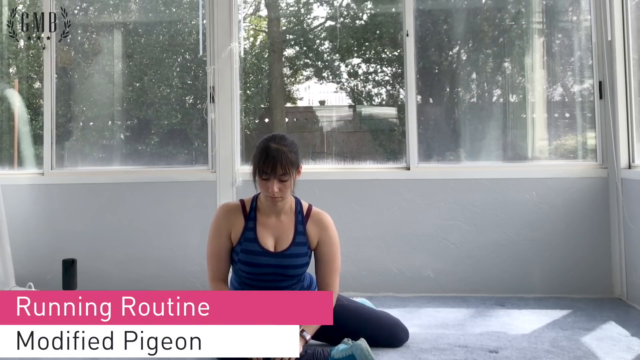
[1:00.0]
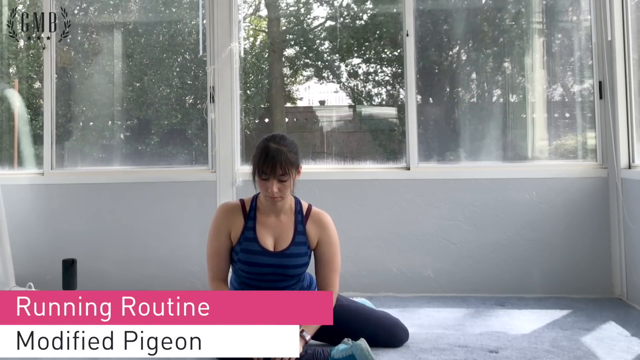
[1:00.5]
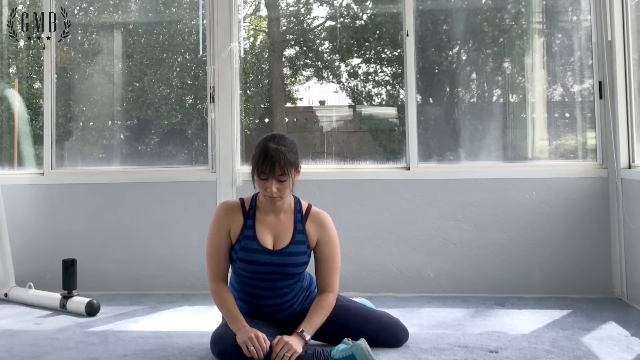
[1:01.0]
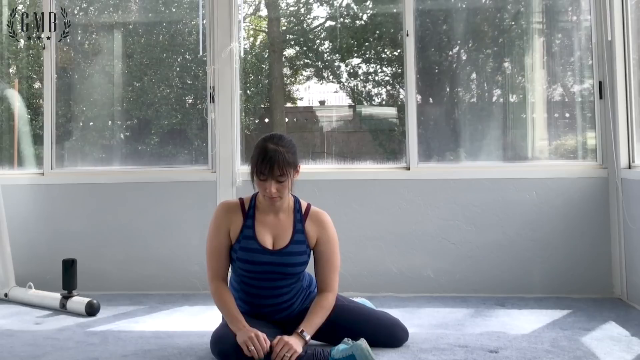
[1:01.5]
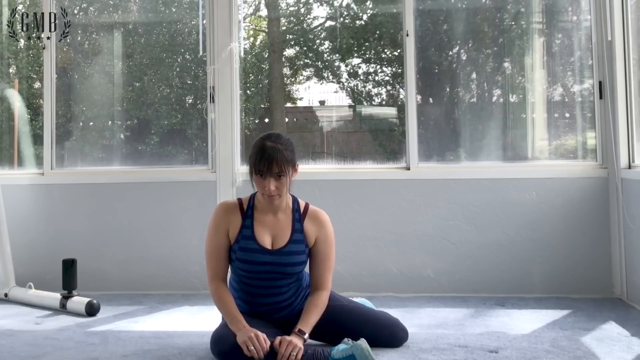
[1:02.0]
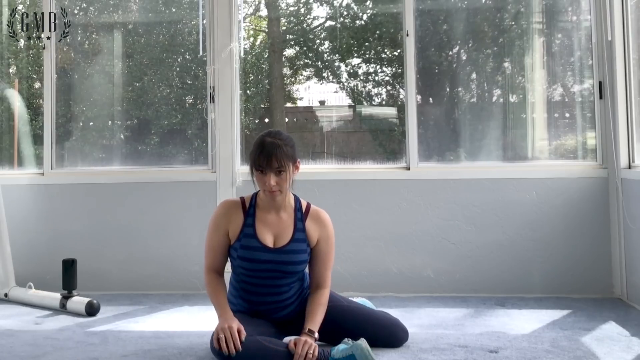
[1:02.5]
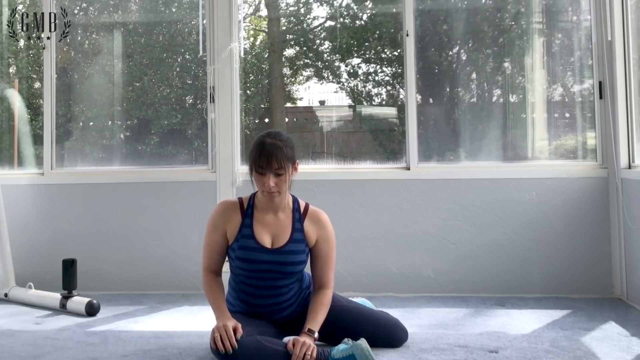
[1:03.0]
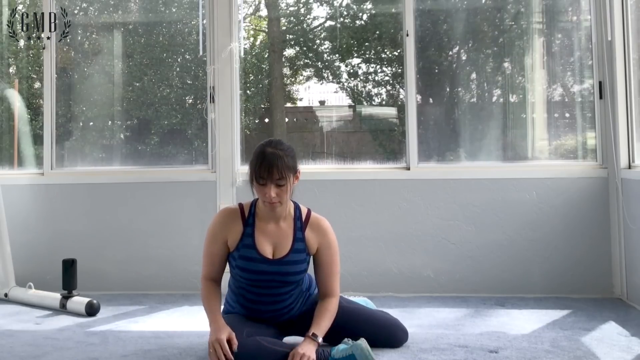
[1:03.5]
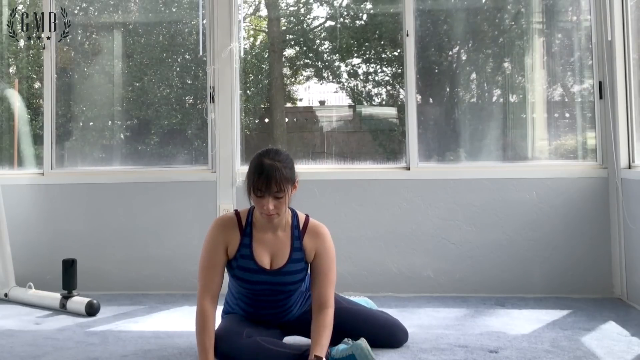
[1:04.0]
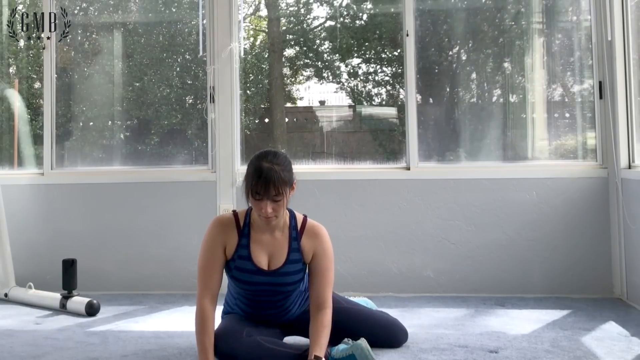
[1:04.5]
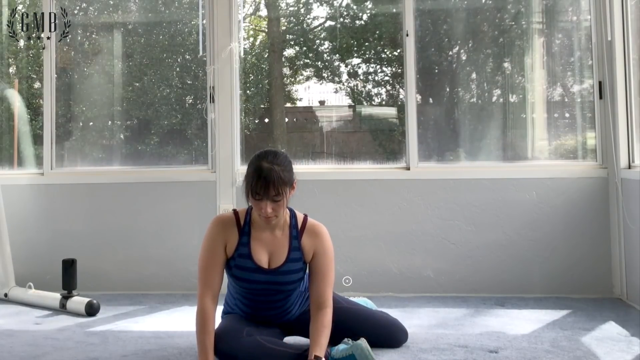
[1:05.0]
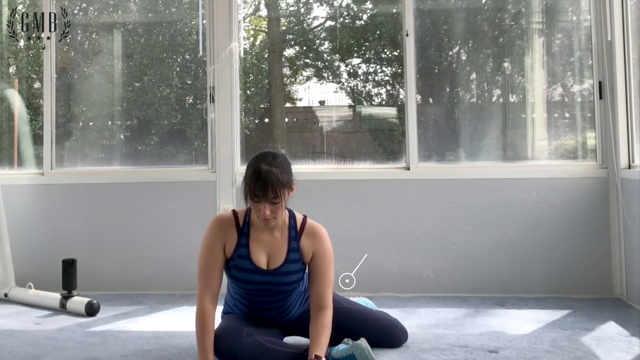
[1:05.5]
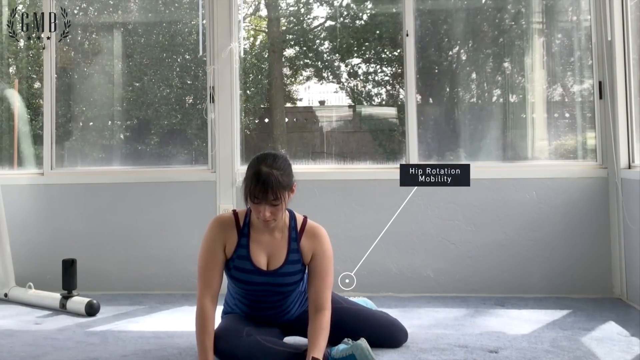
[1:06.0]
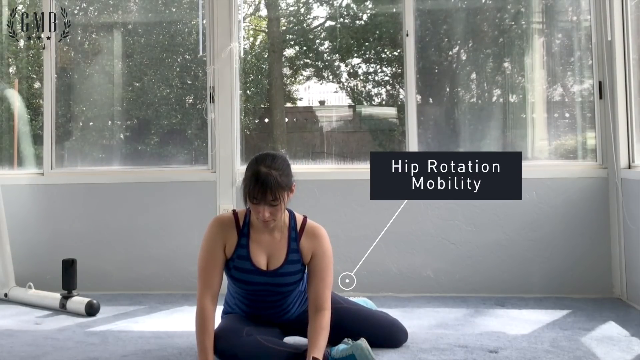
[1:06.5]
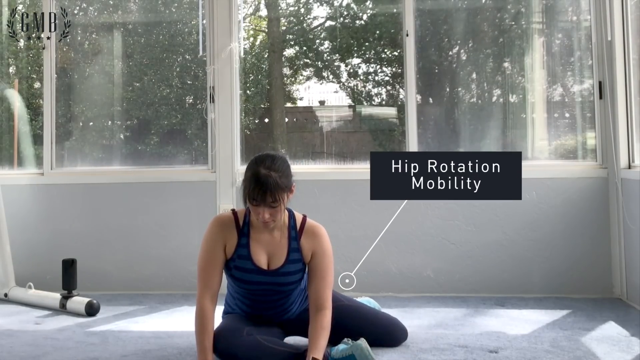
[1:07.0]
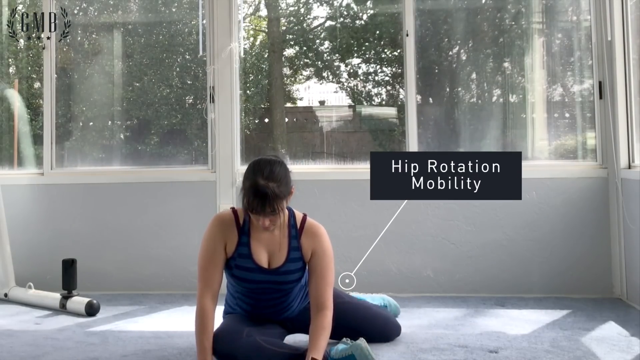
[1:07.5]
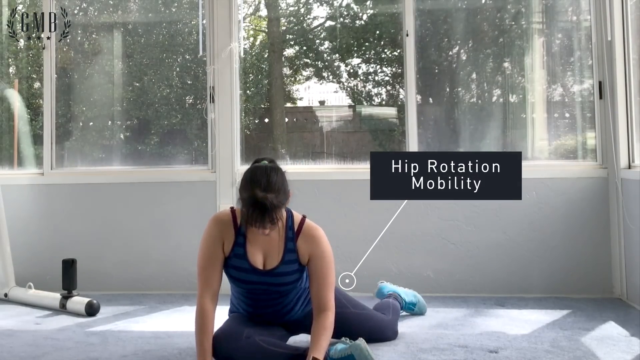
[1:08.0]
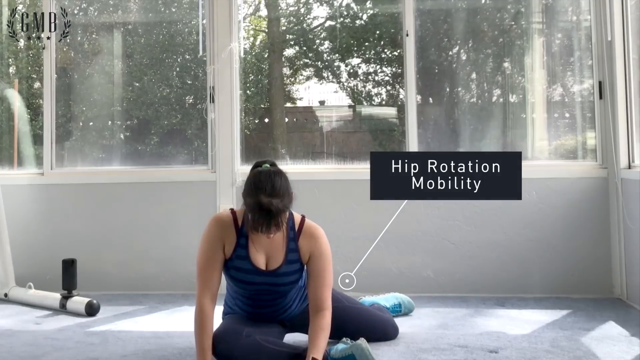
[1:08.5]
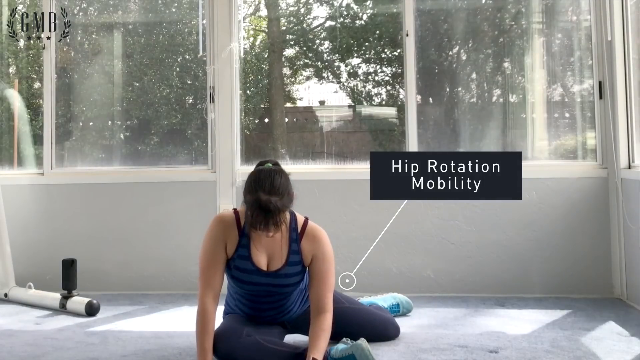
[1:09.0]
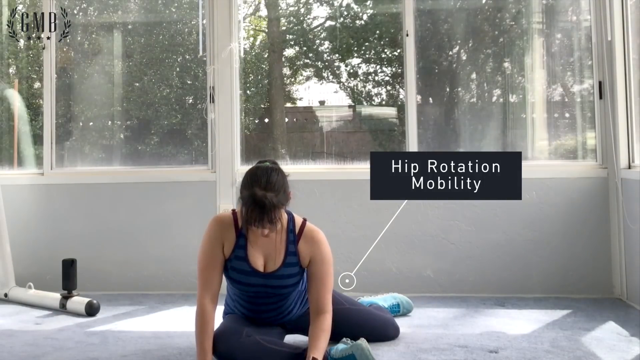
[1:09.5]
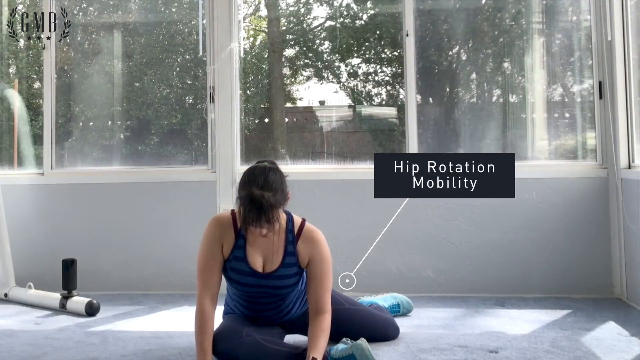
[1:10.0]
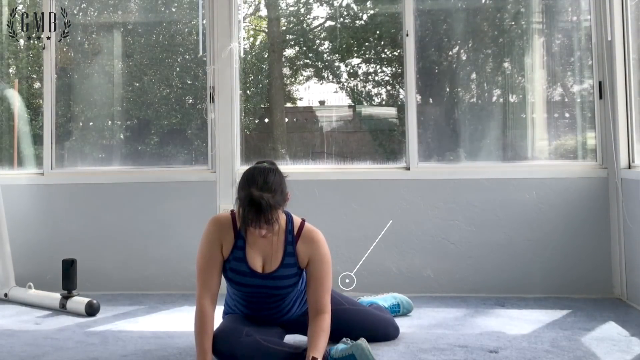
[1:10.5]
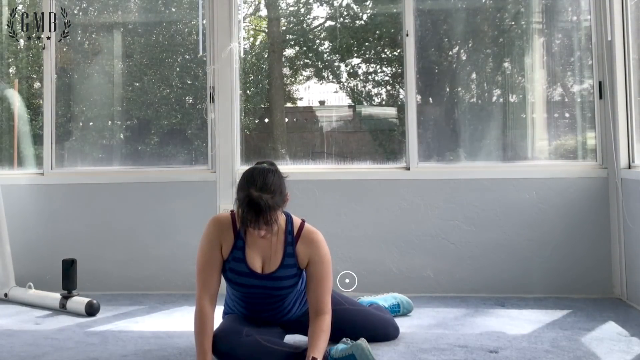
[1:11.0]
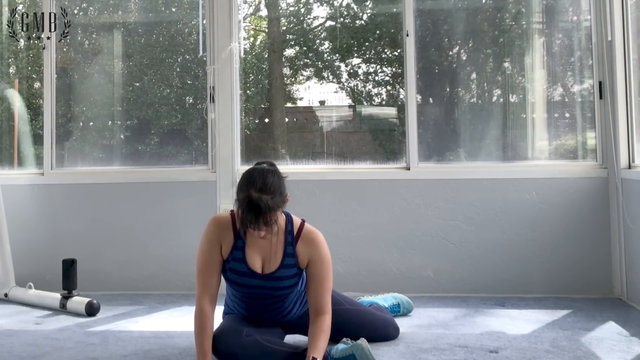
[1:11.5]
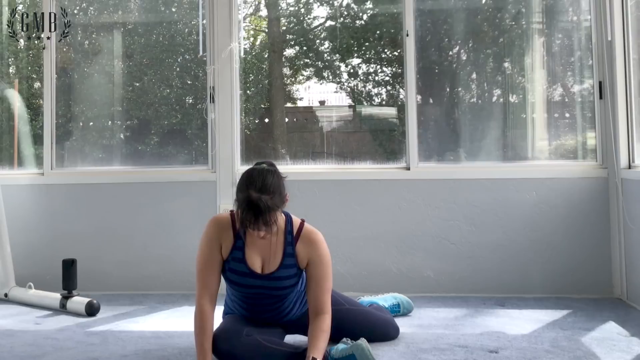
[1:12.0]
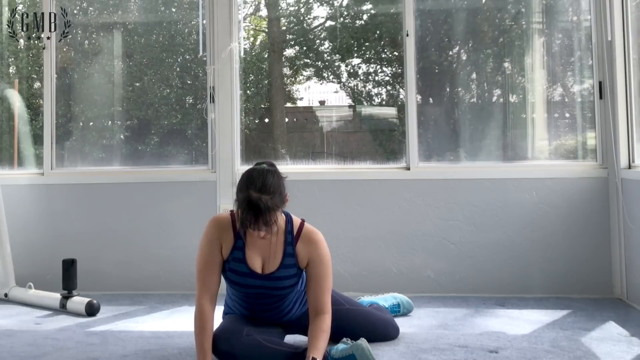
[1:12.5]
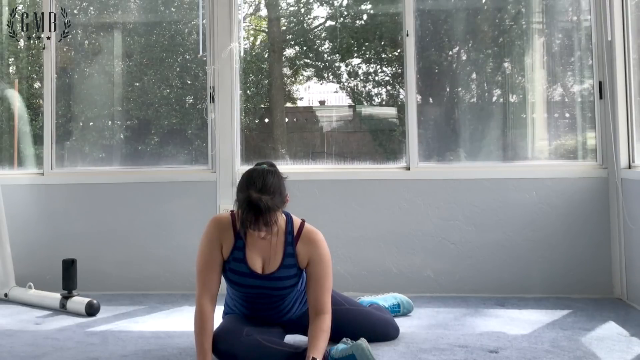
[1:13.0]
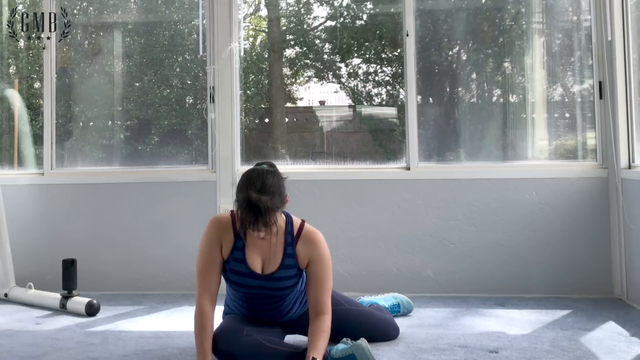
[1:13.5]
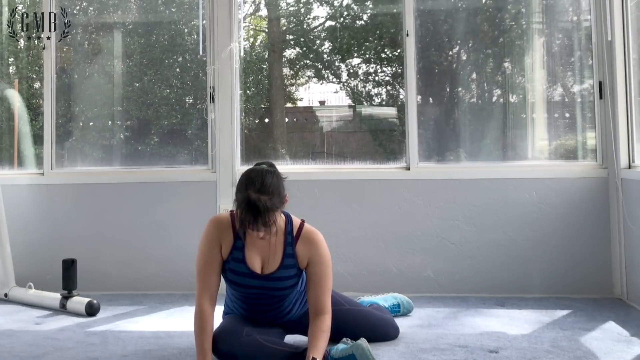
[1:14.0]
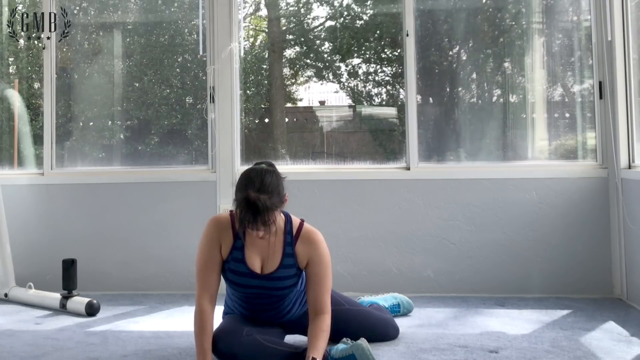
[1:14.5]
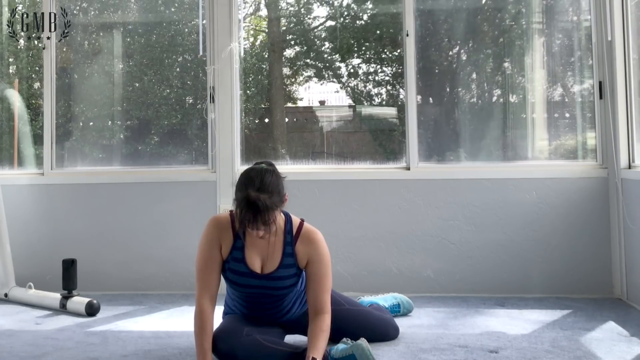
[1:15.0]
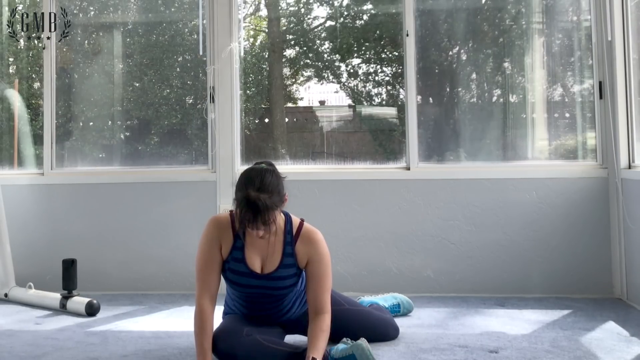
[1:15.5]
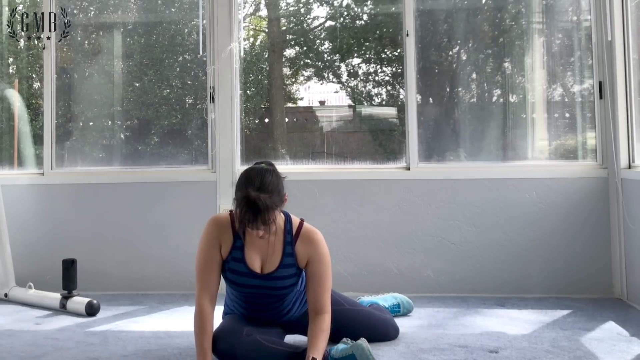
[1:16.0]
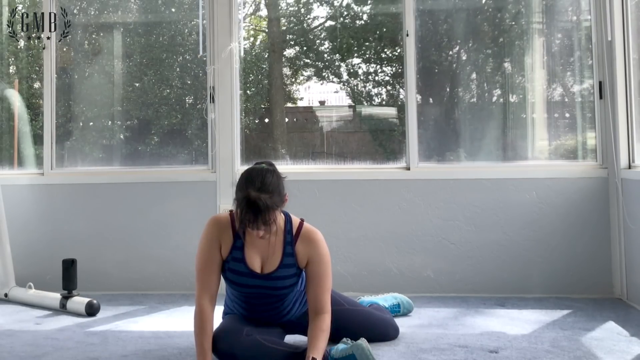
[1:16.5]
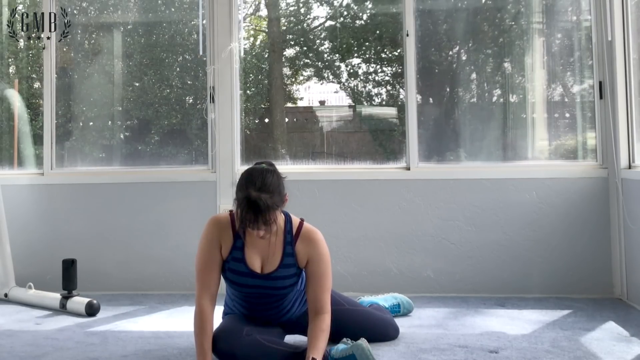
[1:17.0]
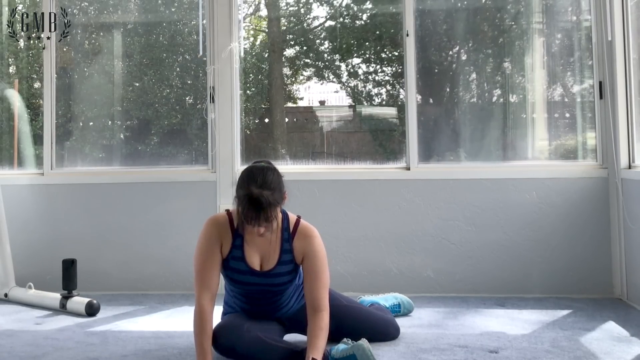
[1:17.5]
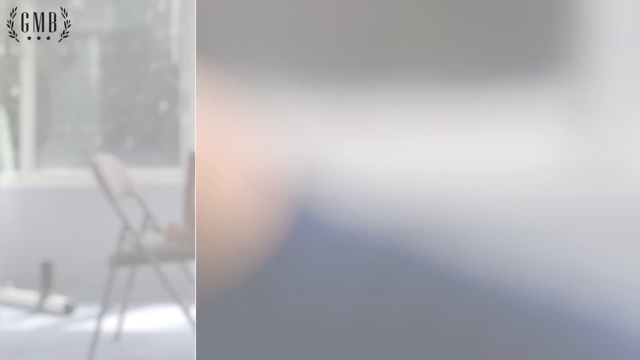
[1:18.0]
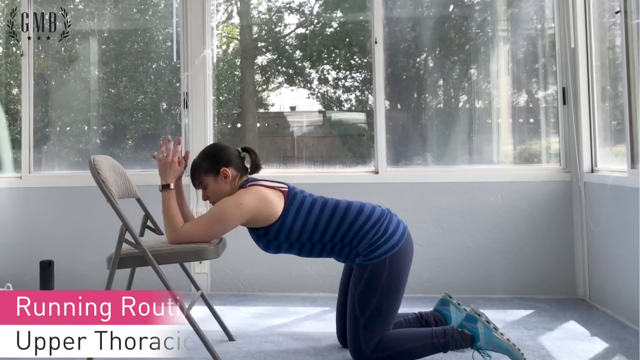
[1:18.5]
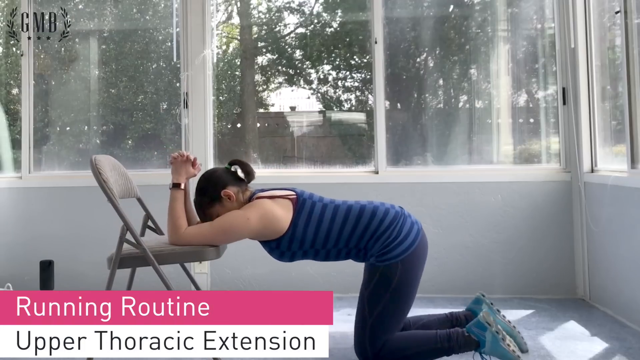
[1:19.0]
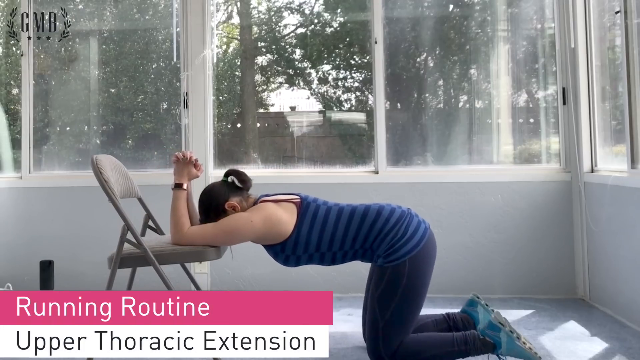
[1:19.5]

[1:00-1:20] A woman in a black and blue tank top and tight blue shorts is squatting on the ground. A pink banner with white lettering at the bottom says "Running Routine." She slowly puts her hands down onto the ground. A white dot appears just above her hip on the right side, with a line coming up from it to a pop-up that says "hip rotation mobility." She sticks her right leg out back so that her light blue shoe is in line with the wall behind her, and stays in that position for quite a while. The video then splits to a different screen: she is hunched over onto a folding chair, her elbows on the chair's cushion, her knees flat on the ground, and her chin just above the edge of the chair. A pop-up at the bottom says "Running Routine," and as it comes up her head goes down level with the top of the chair, and her back is completely flat.